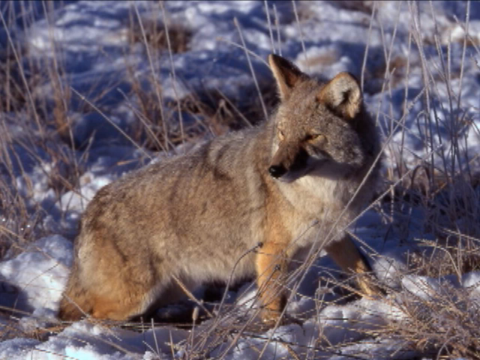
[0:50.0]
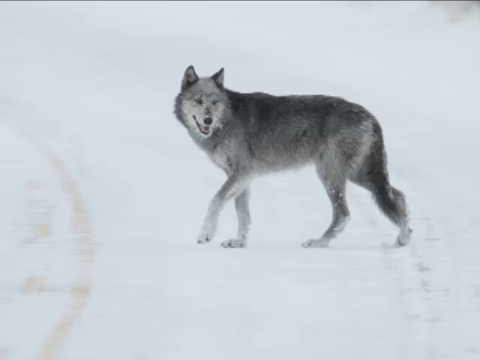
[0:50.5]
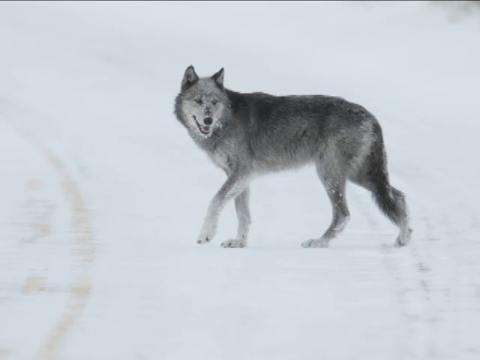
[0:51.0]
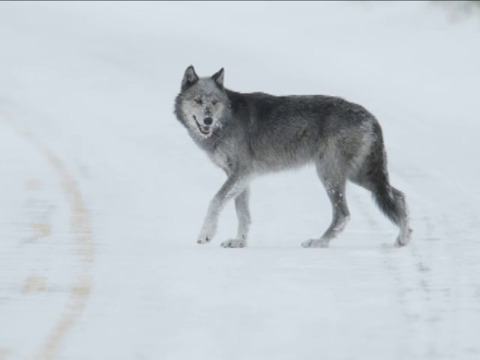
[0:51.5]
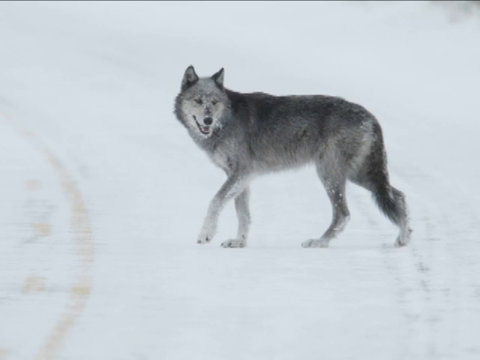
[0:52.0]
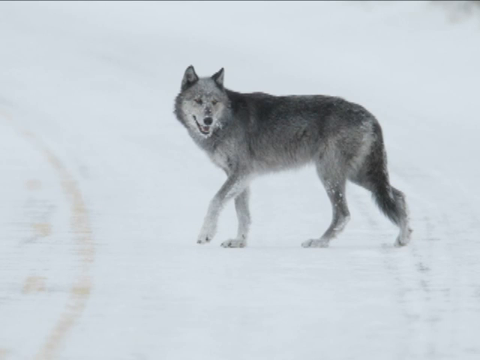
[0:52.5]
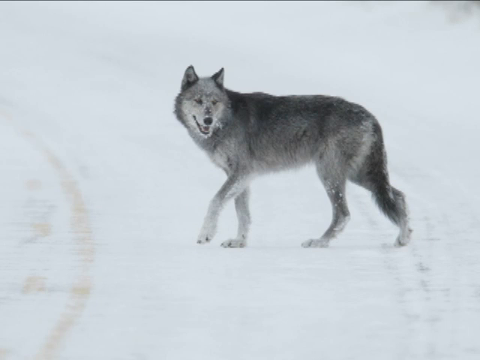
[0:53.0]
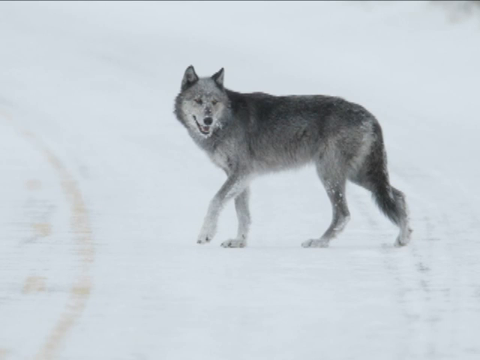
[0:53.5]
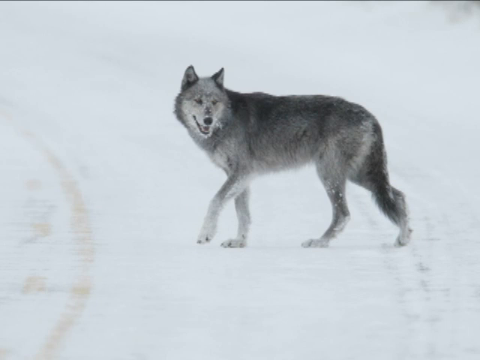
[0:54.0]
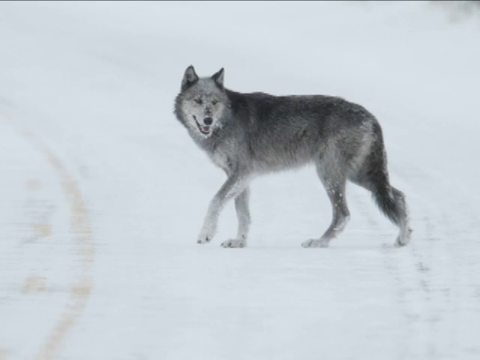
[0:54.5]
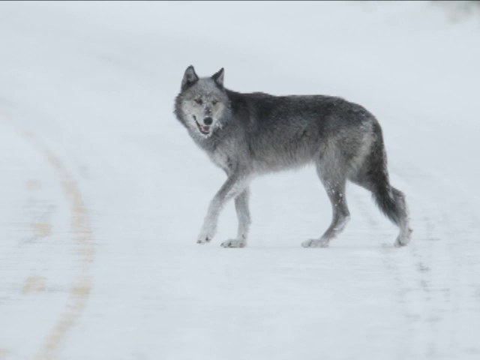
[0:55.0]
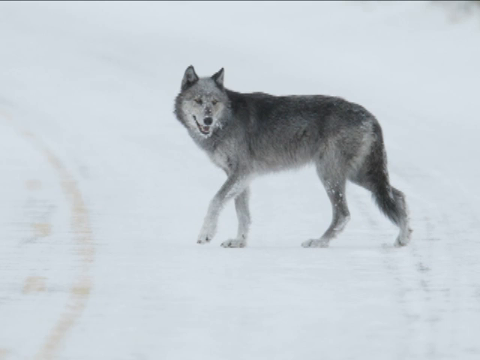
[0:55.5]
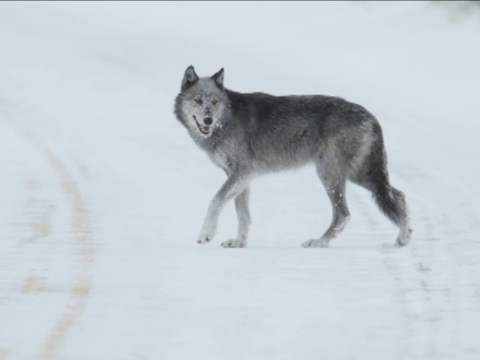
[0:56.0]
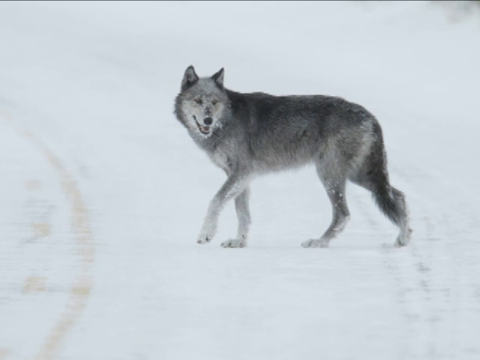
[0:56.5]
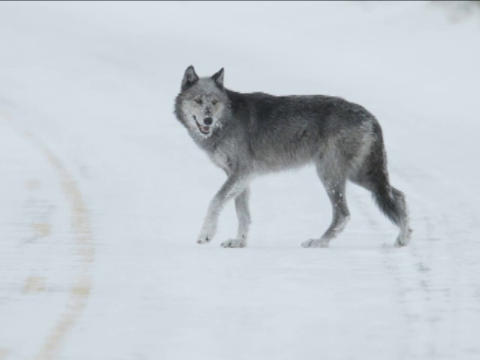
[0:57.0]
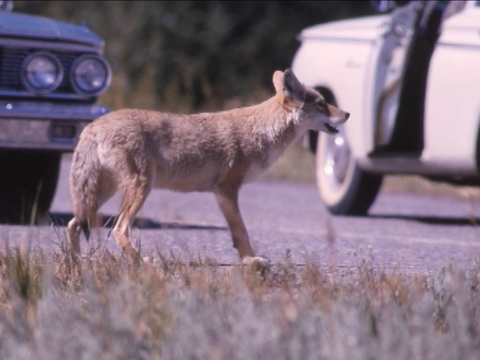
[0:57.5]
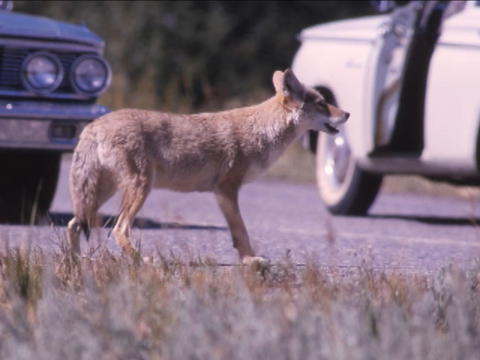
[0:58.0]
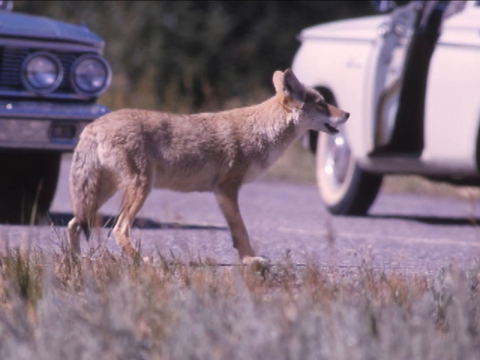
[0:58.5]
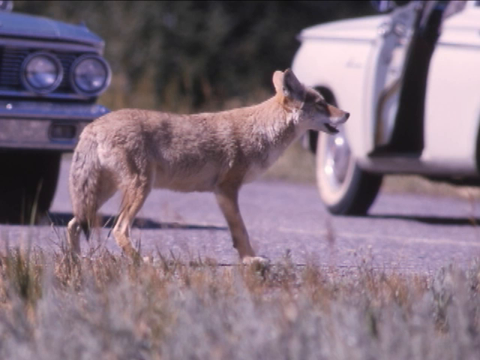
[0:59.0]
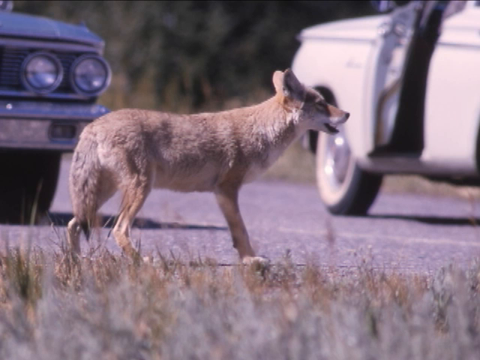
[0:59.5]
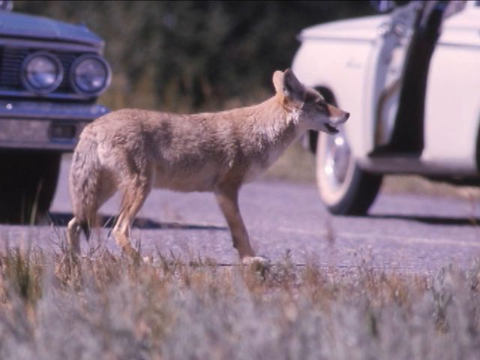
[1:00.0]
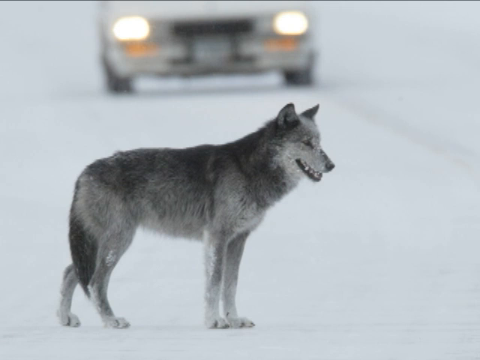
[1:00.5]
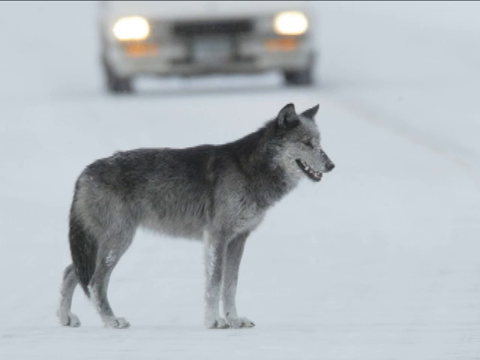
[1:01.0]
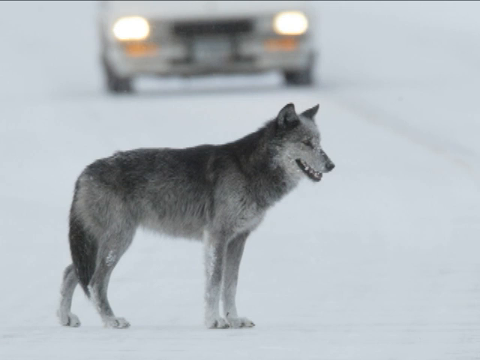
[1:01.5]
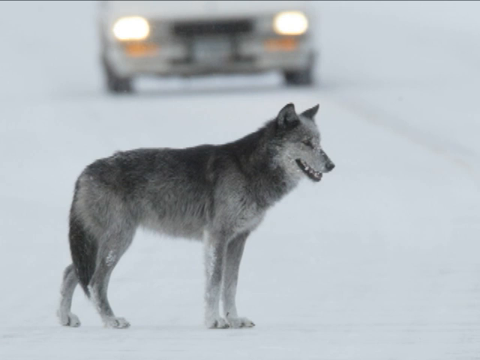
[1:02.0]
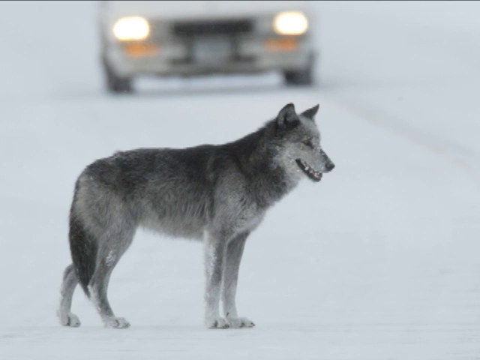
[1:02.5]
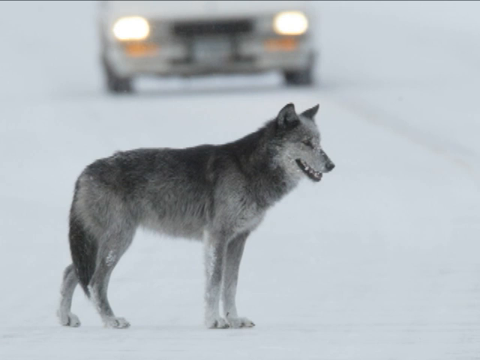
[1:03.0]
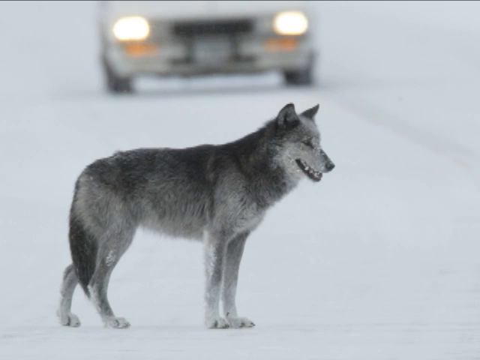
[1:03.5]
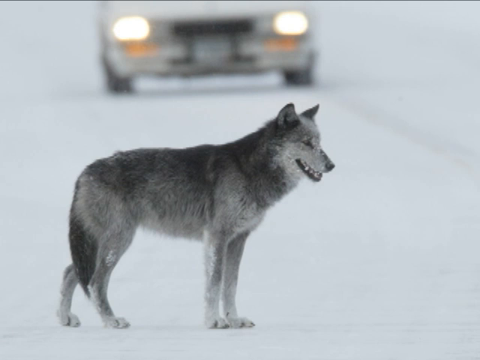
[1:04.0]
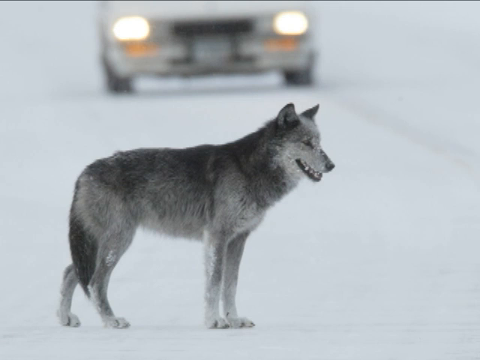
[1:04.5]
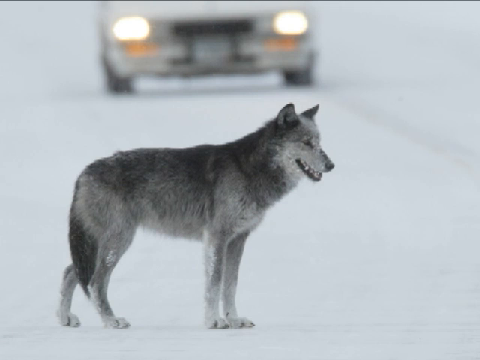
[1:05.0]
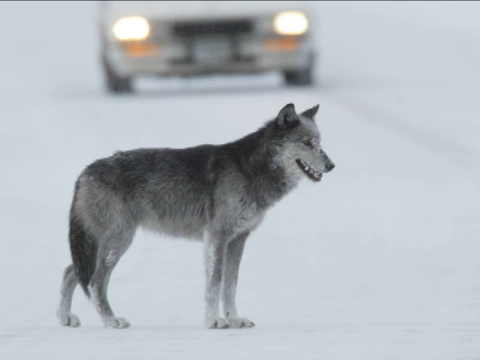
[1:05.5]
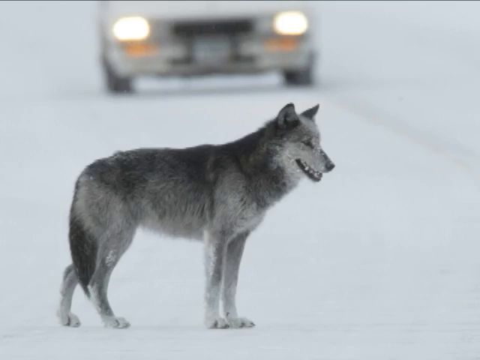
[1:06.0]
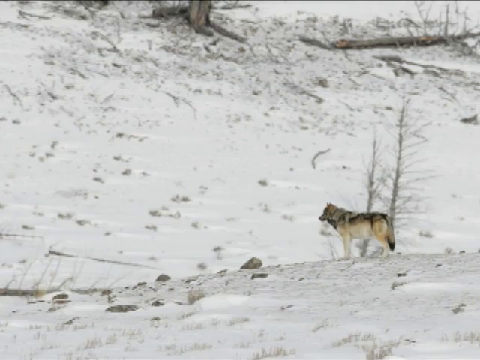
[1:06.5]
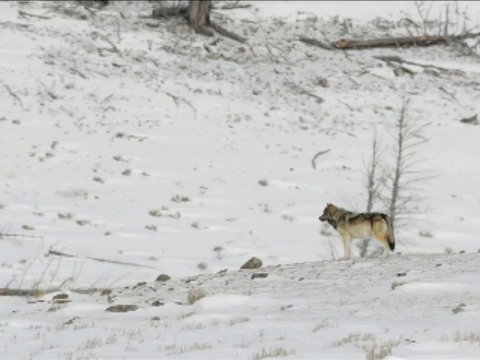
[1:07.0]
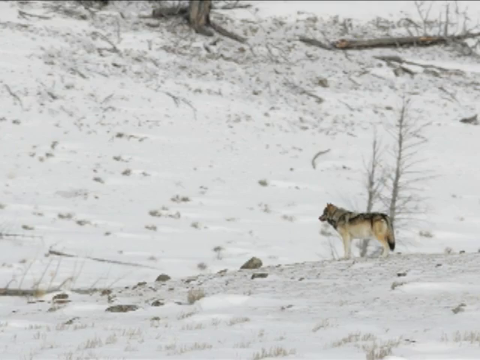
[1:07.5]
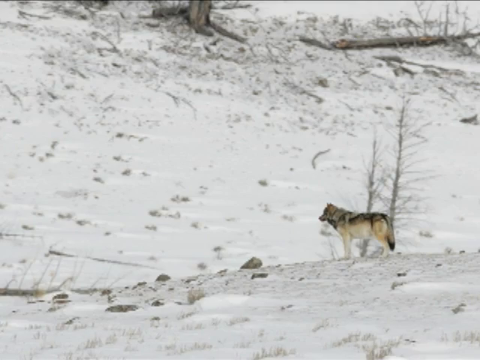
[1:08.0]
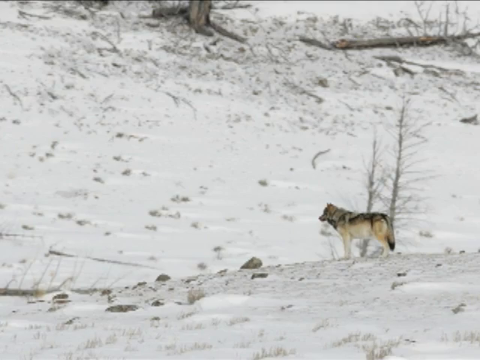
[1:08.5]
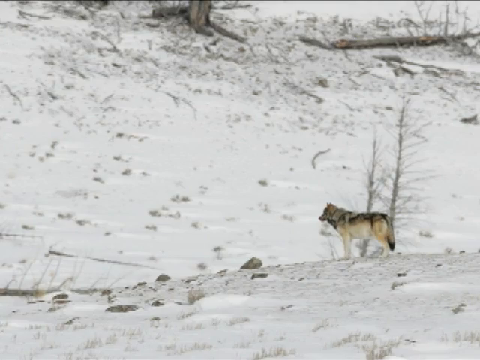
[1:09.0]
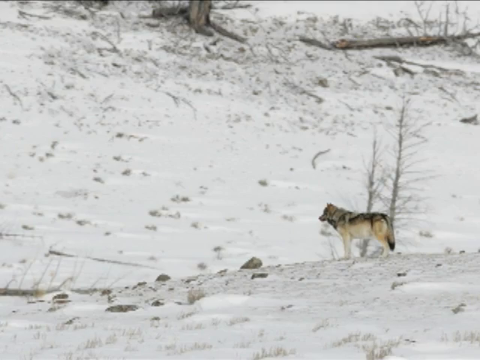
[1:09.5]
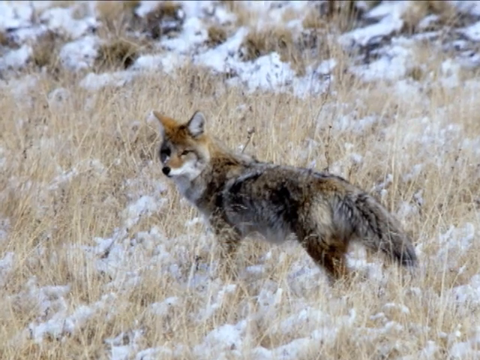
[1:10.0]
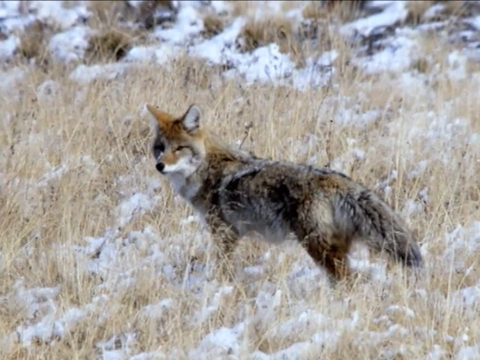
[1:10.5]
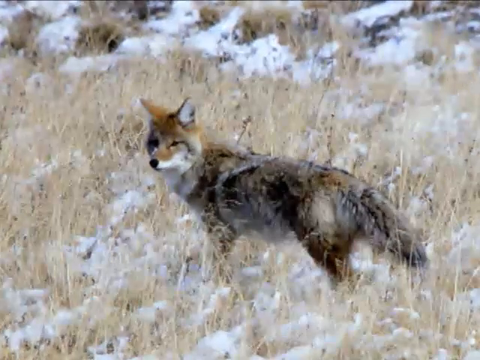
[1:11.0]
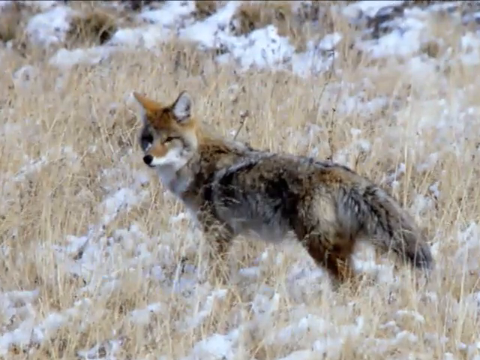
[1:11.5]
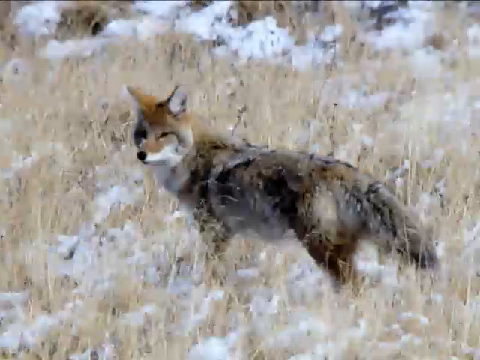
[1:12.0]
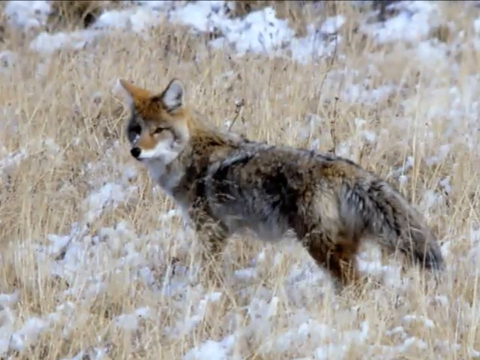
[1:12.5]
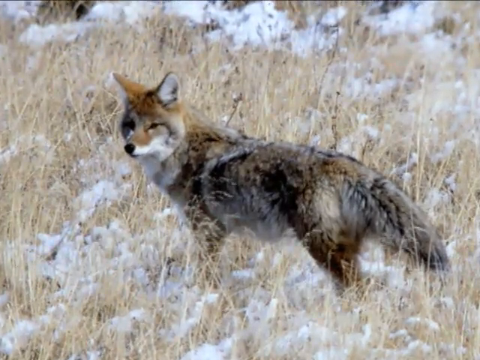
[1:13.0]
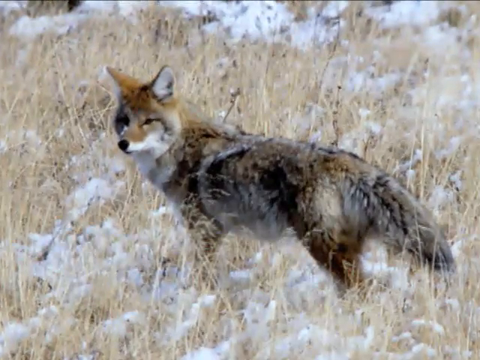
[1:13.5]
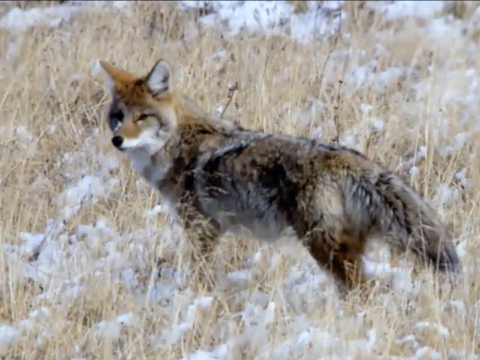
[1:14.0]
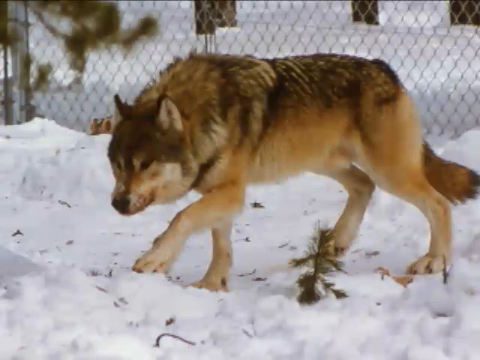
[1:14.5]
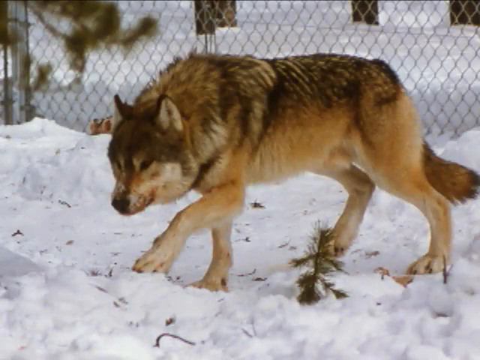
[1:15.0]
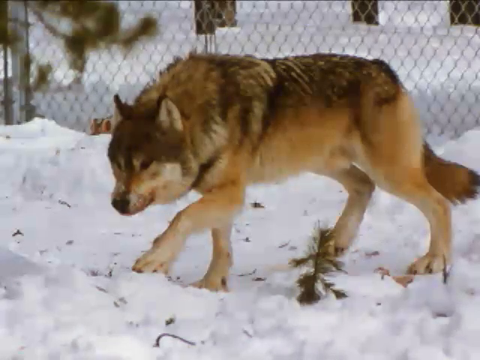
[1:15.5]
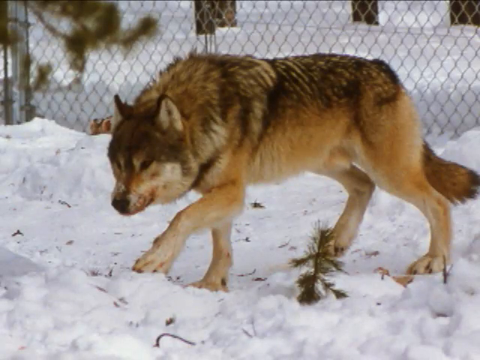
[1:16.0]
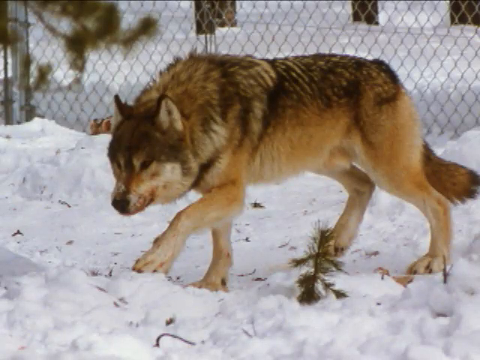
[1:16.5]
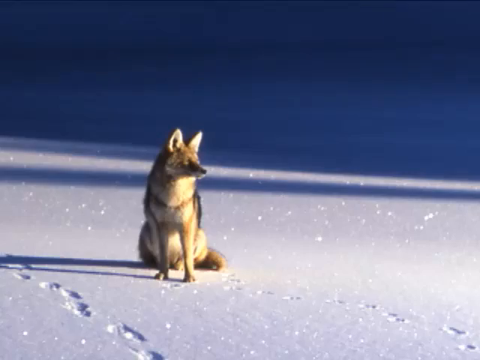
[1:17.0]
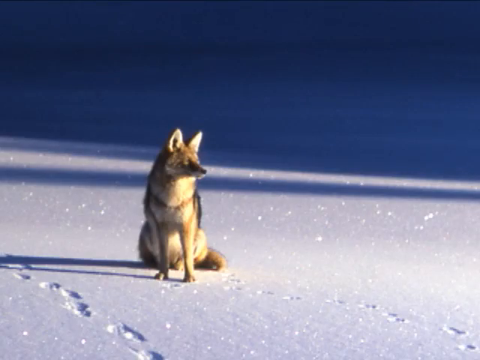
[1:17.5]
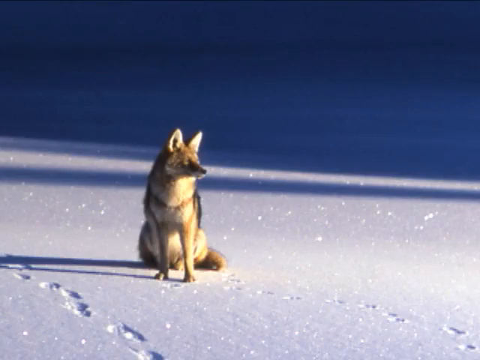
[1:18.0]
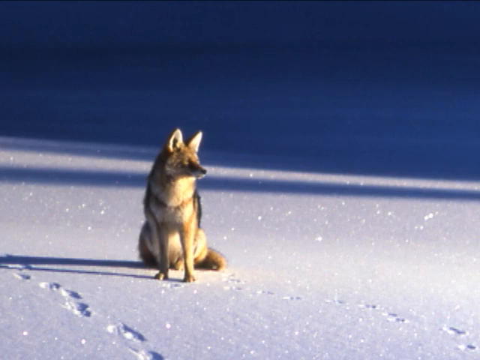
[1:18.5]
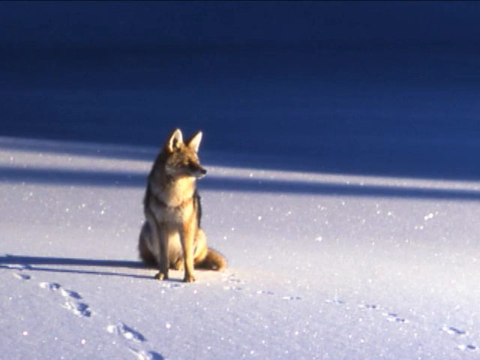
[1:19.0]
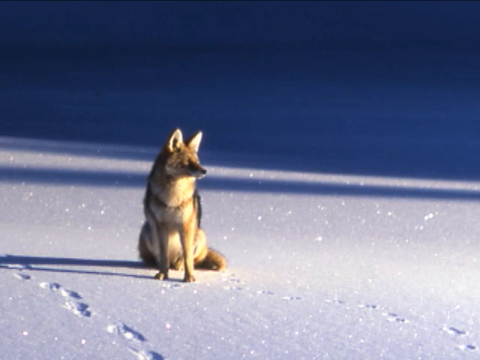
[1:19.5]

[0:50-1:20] A grey canine stands in the foreground on all fours, its tail to the left and facing right, with a snowy scene behind it. There seems to be a truck coming directly at him down the street; both headlights and the reverse lights underneath are visible. The scene switches to a hill covered in snow, with a tree at the top center and rocks jutting out over the snow. Two barren saplings are in the foreground, and a wolf stands in the foreground on the right side, facing the top of the hill. That image is replaced by a wolf on all fours in a snowy scene in direct sunlight. He looks like he is smiling, has a gray coat with a dark top that contrasts starkly with the snow behind him, and seems to be walking off to camera left.